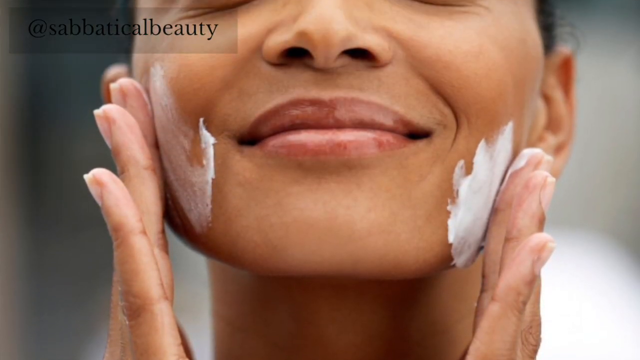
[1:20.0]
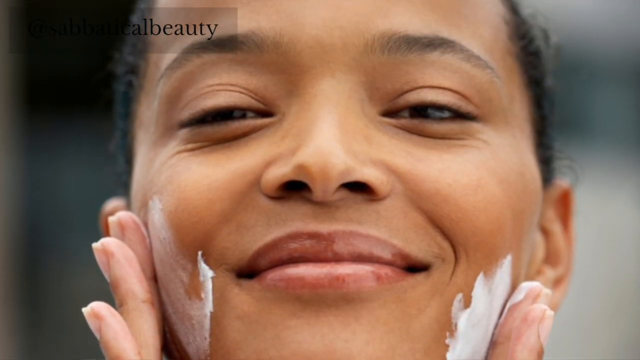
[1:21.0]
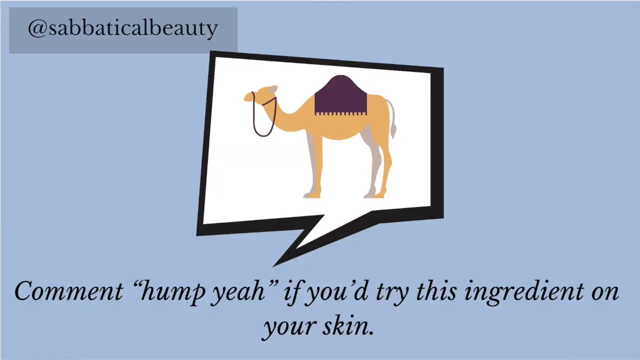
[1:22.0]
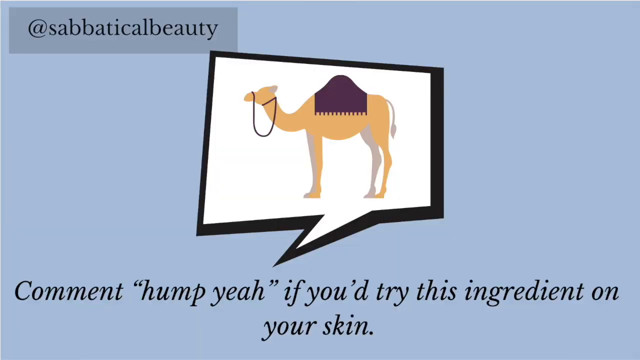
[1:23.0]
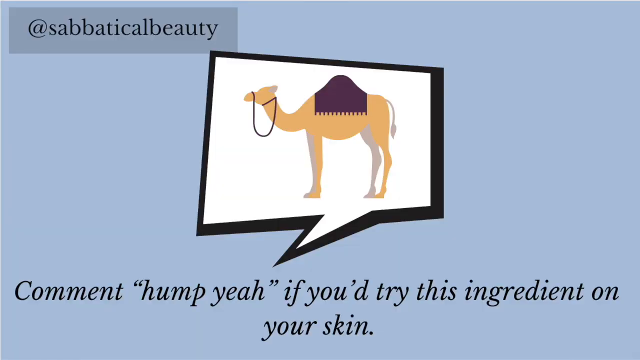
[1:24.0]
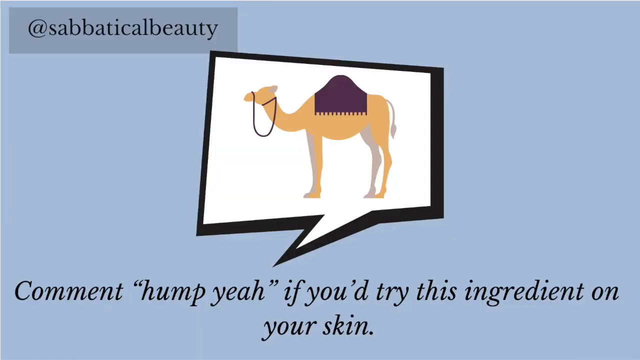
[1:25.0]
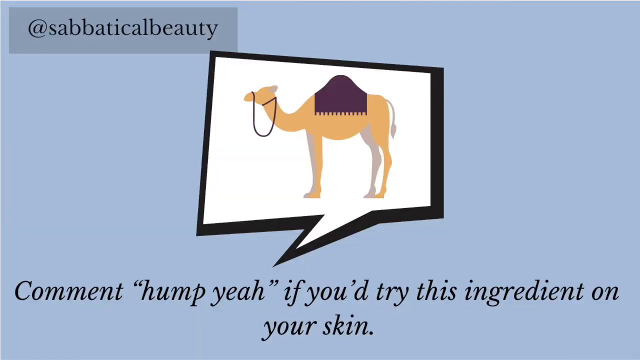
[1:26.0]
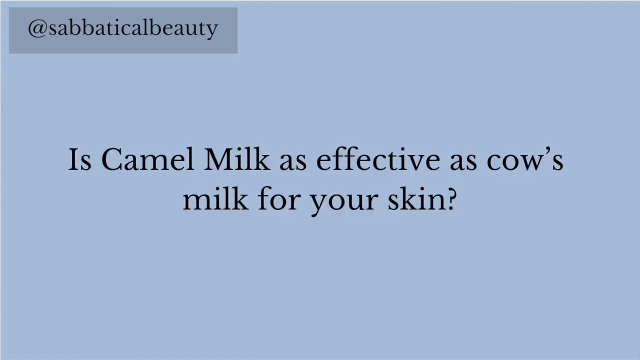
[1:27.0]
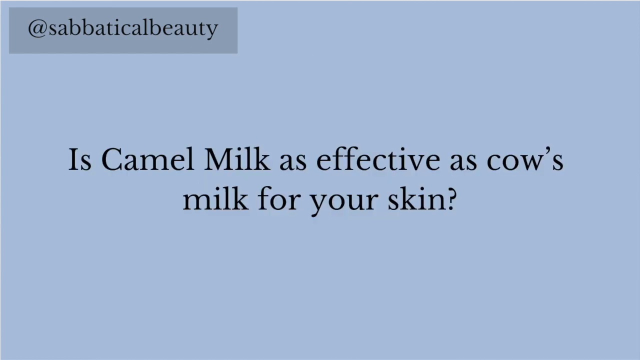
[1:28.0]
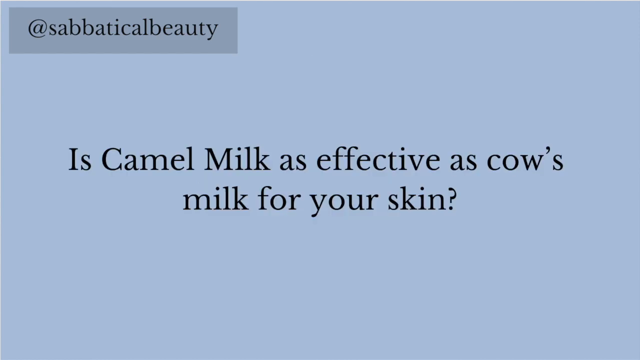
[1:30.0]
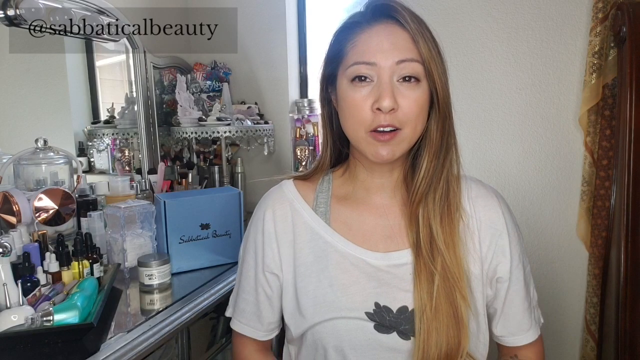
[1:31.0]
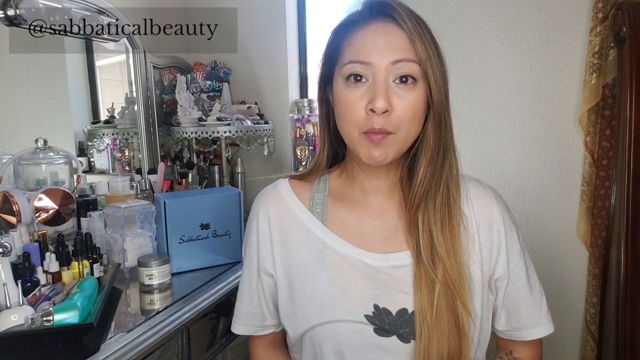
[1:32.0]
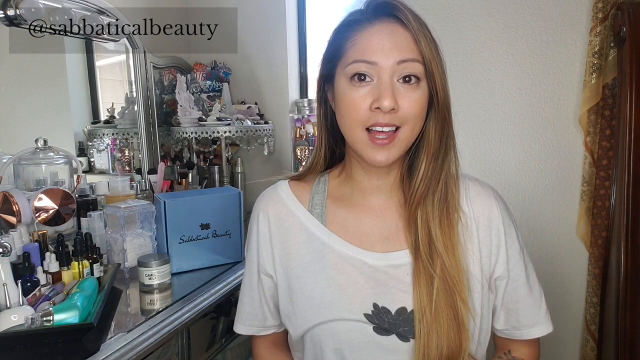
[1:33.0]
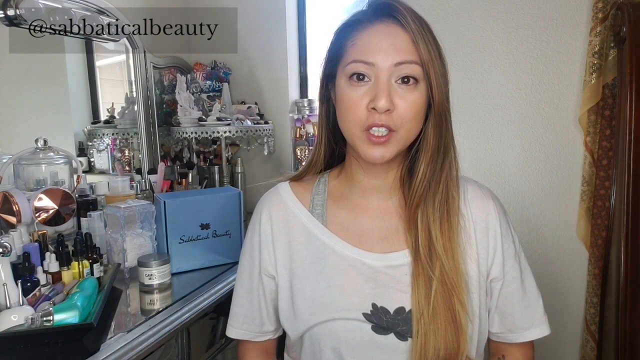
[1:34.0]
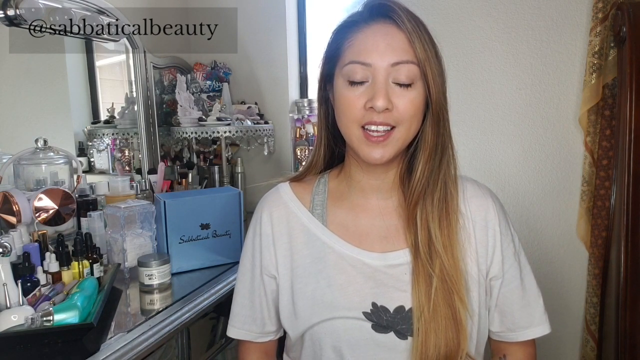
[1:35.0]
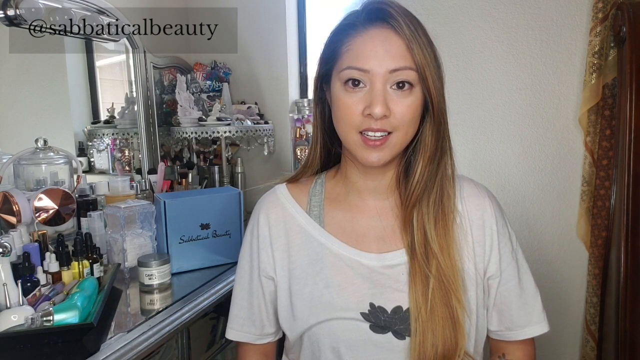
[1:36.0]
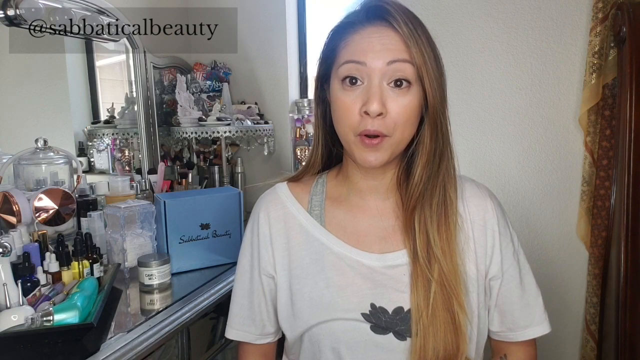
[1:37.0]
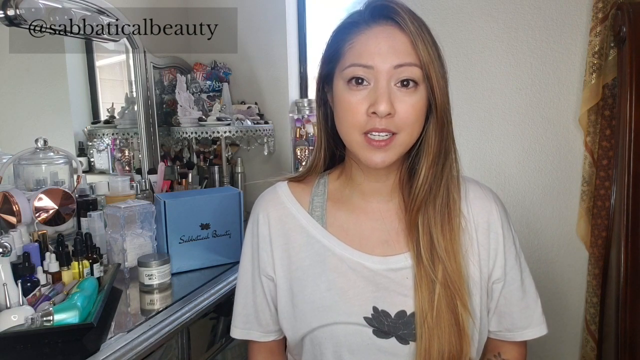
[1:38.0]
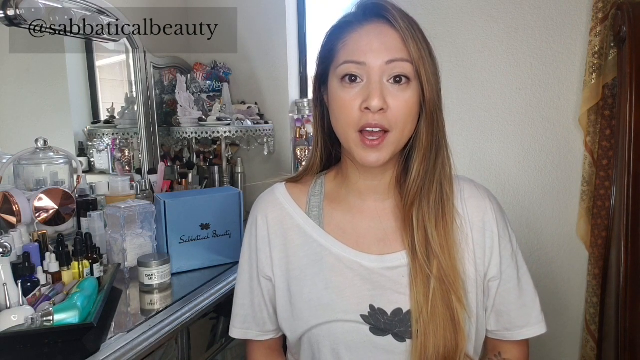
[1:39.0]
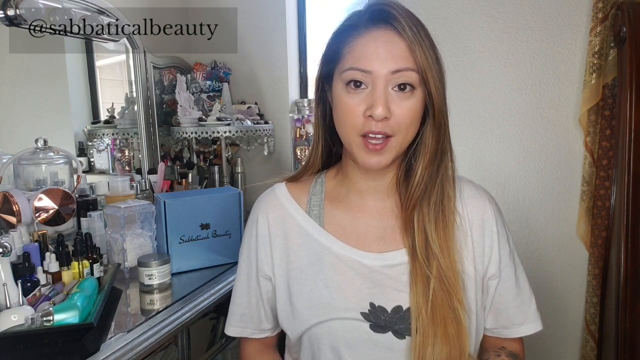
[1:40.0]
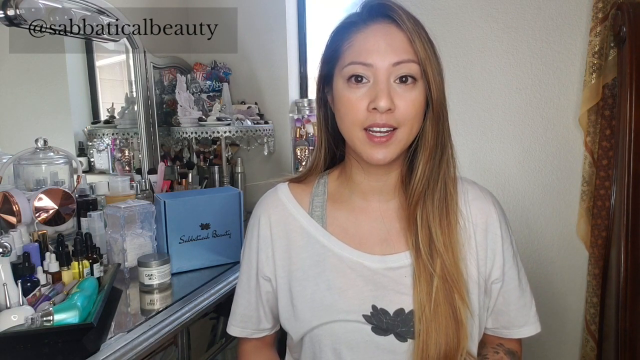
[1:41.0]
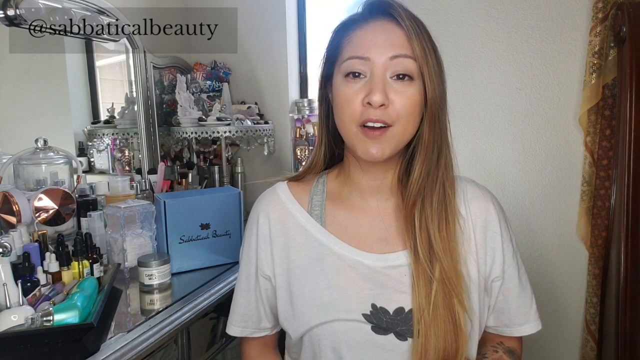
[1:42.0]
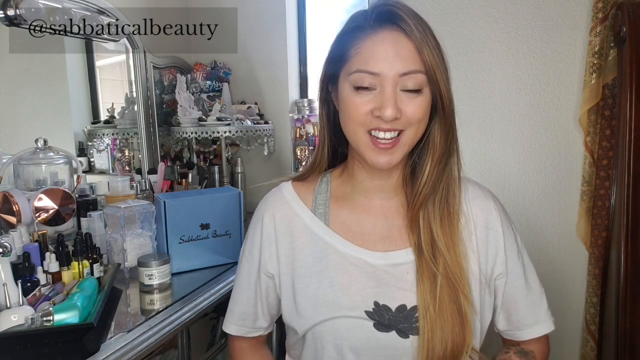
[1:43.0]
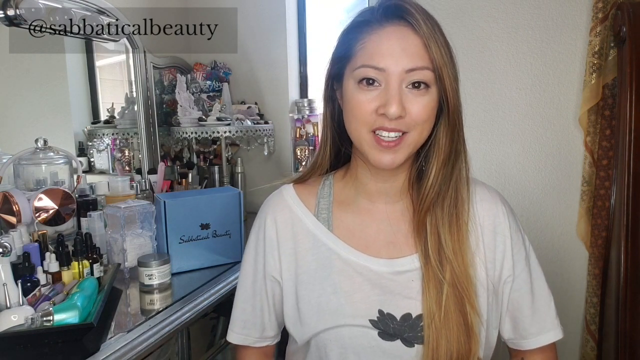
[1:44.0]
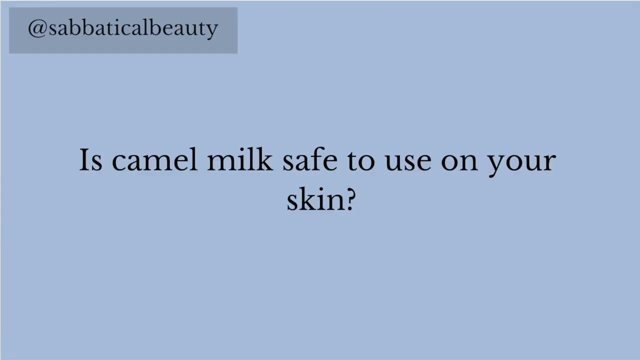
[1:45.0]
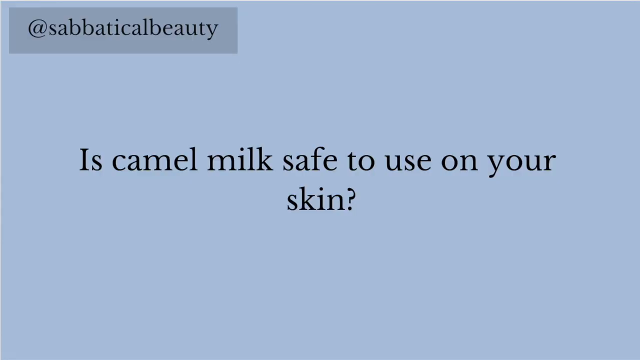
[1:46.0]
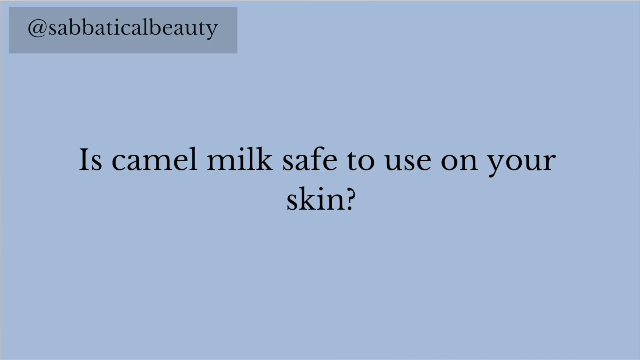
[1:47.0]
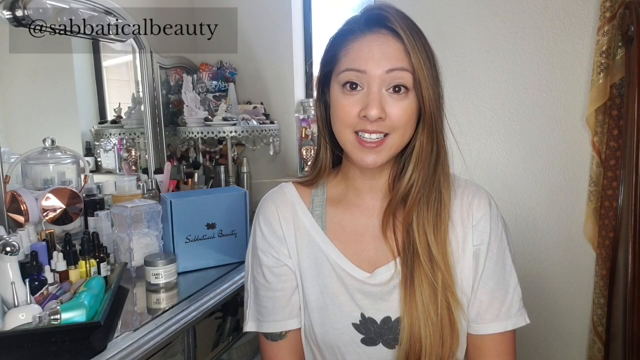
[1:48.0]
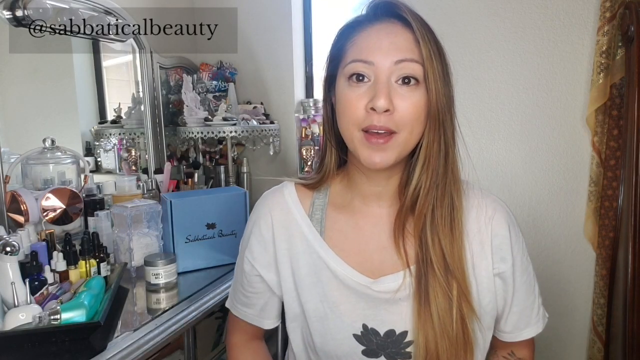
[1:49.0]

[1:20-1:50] A Black African woman applies the advertised skincare; she looks excited and happy about the product. A comment appears that includes "if you would try this ingredient in your skin", and a camel is shown as the logo. Text asks whether camel milk is as effective as cow's milk for your skin, and another line reads "is camel milk safe to use on your skin".